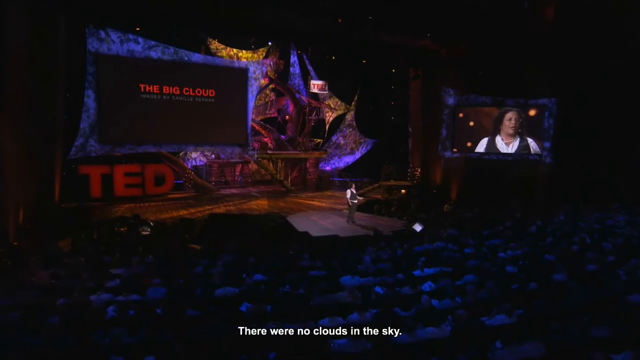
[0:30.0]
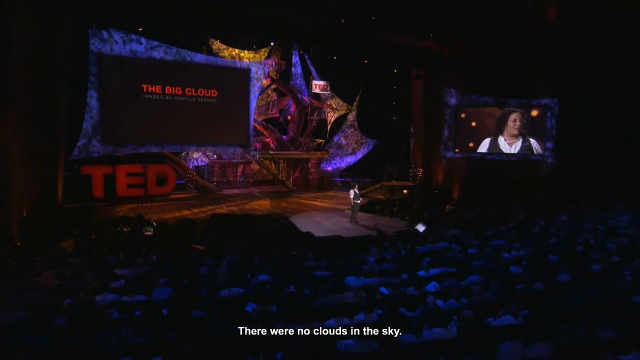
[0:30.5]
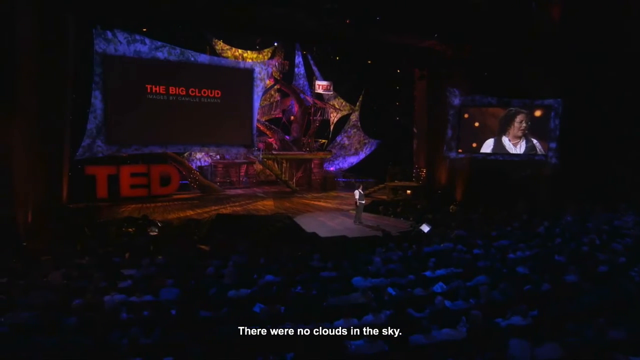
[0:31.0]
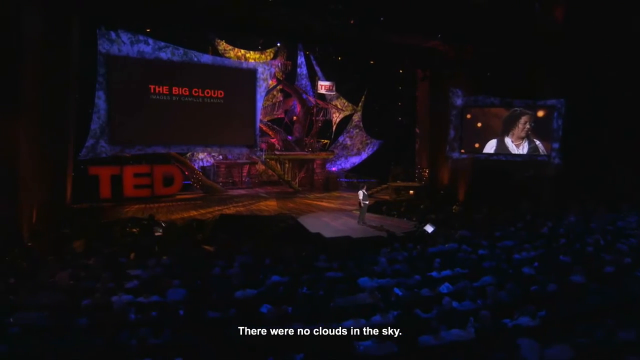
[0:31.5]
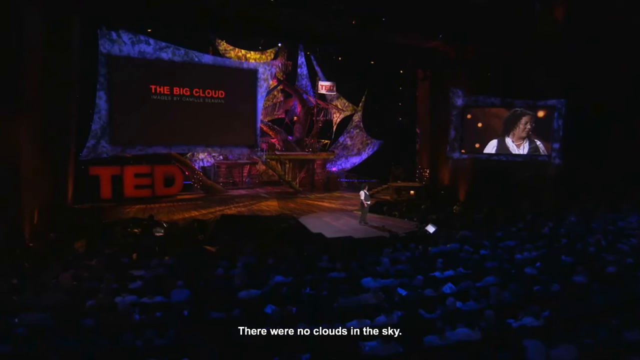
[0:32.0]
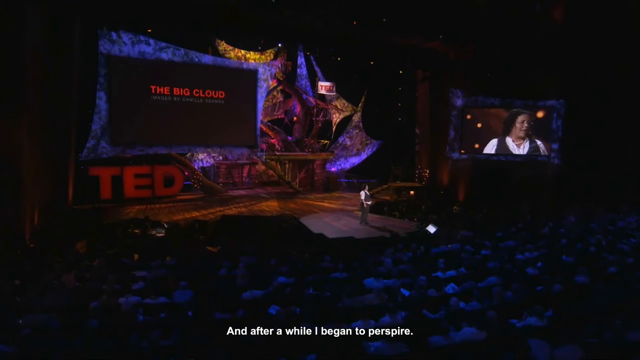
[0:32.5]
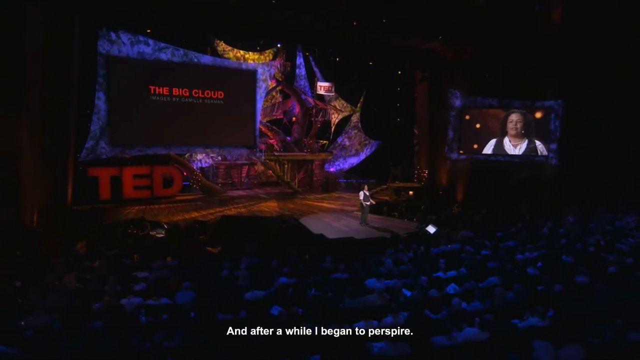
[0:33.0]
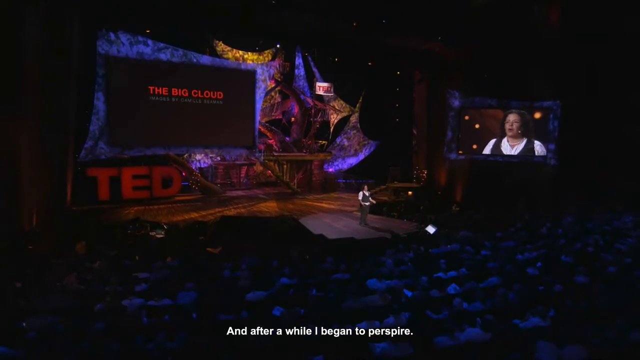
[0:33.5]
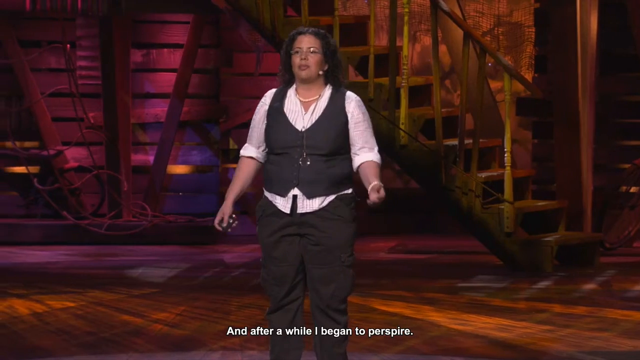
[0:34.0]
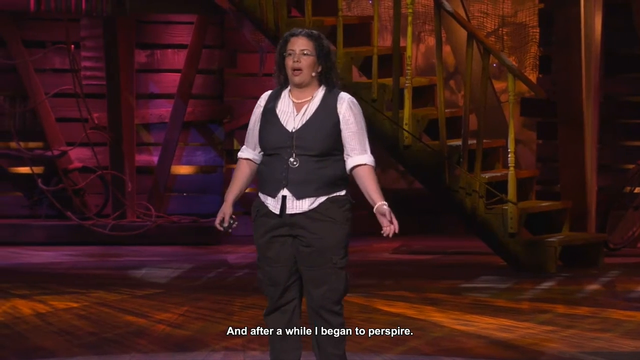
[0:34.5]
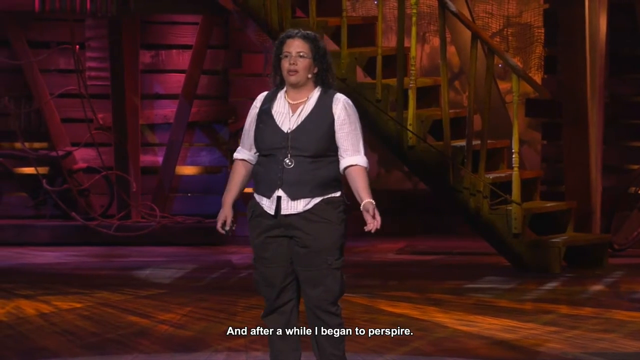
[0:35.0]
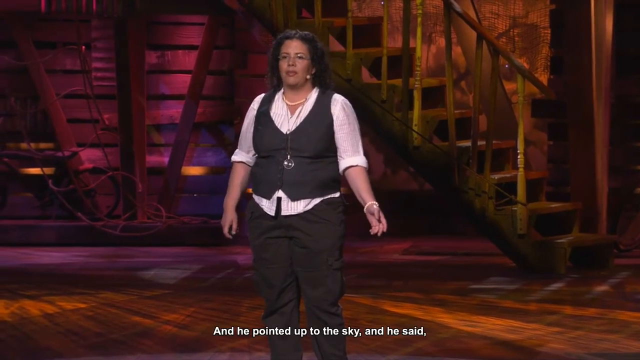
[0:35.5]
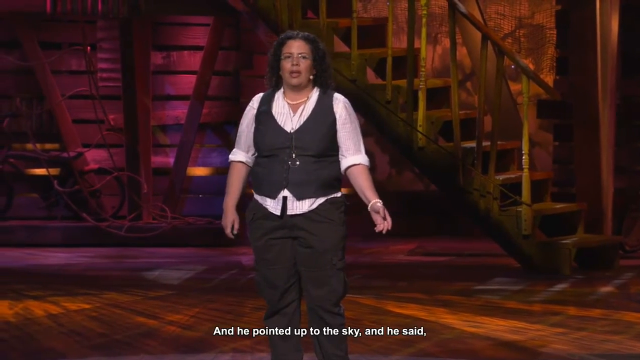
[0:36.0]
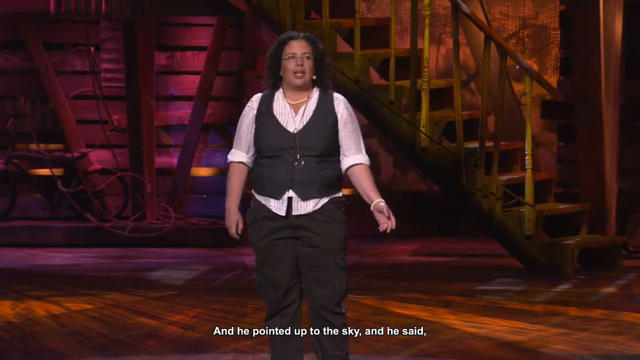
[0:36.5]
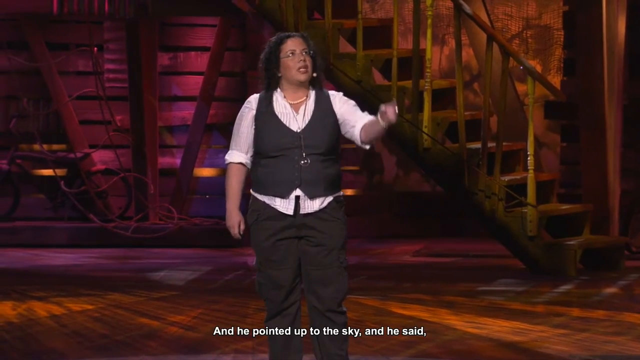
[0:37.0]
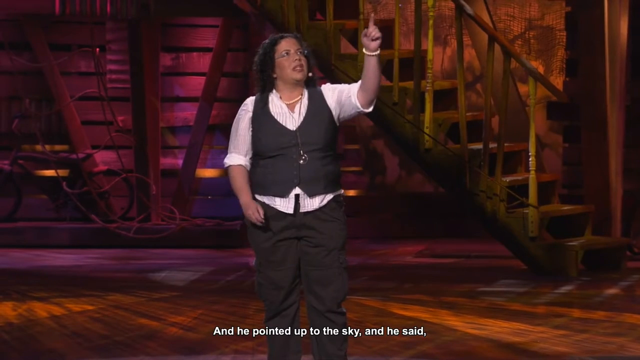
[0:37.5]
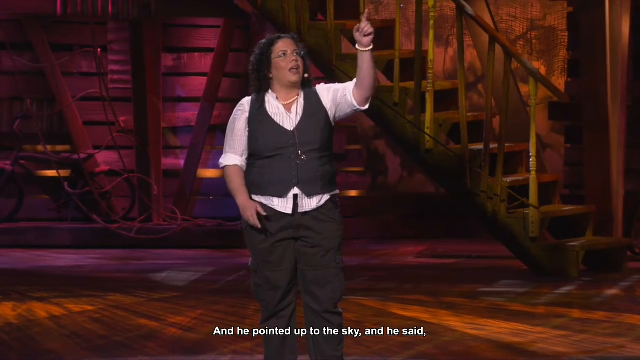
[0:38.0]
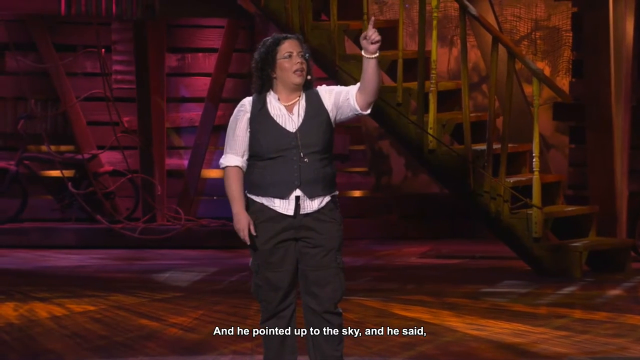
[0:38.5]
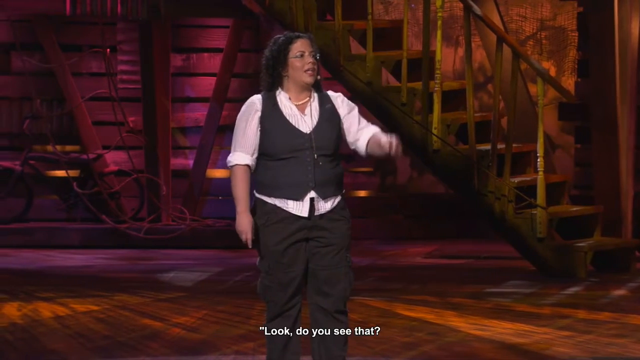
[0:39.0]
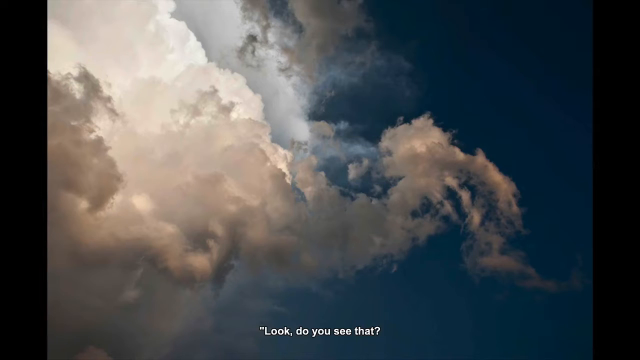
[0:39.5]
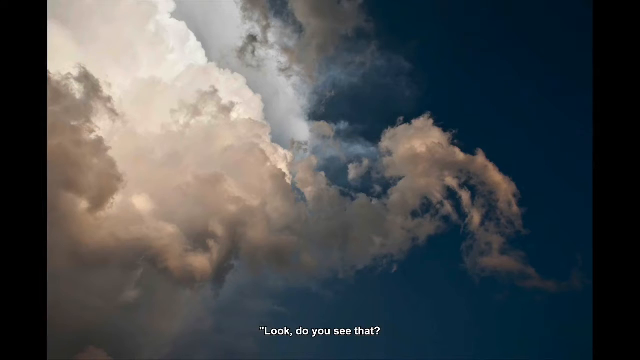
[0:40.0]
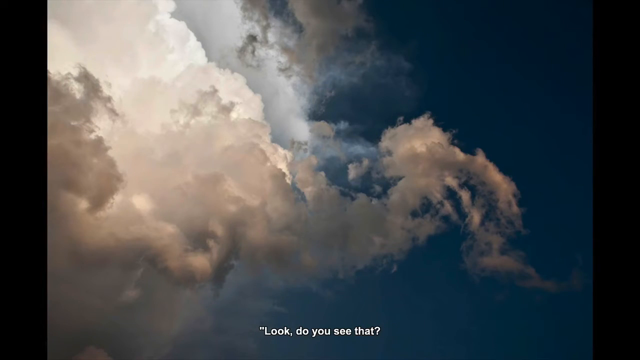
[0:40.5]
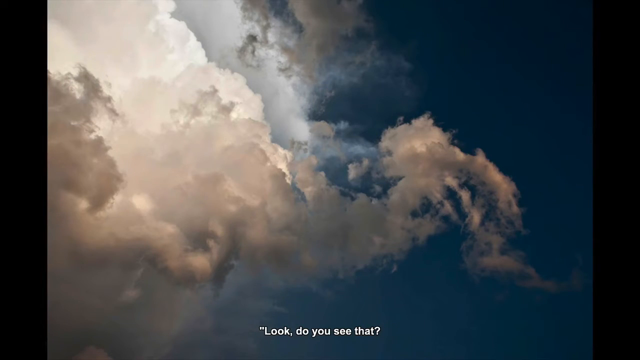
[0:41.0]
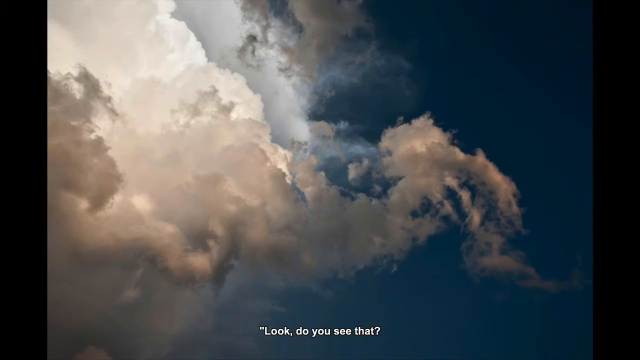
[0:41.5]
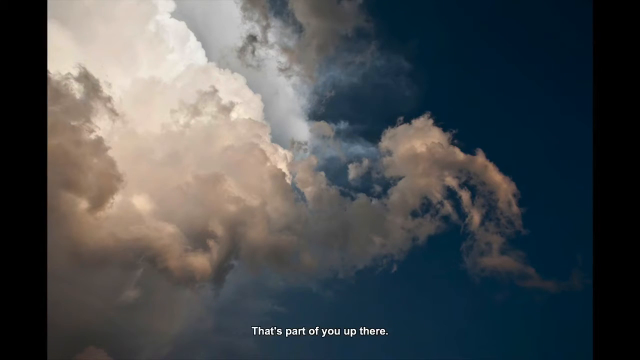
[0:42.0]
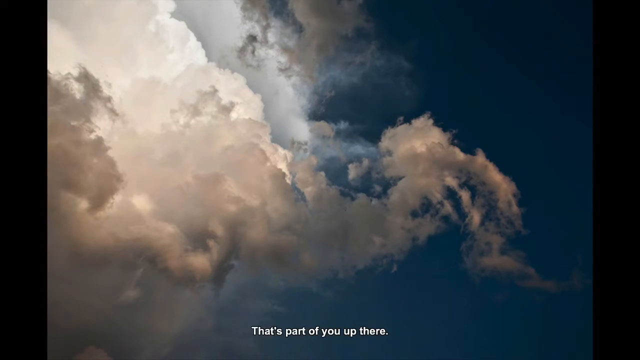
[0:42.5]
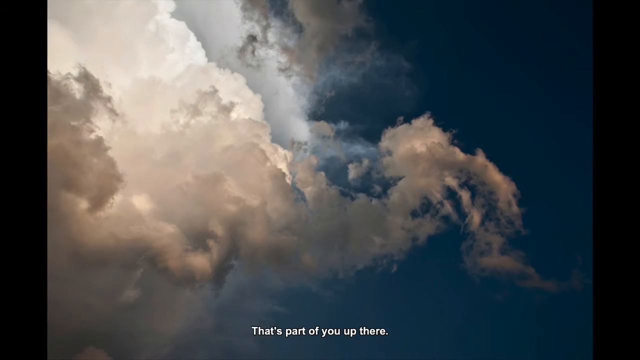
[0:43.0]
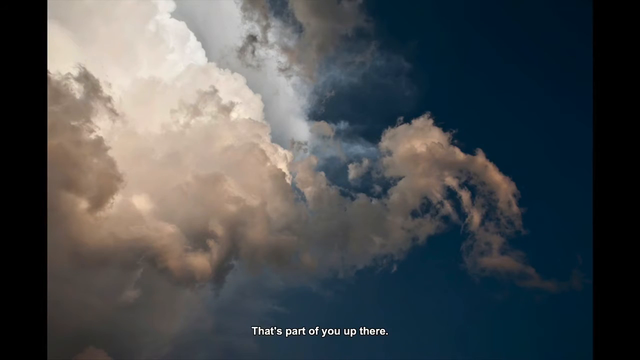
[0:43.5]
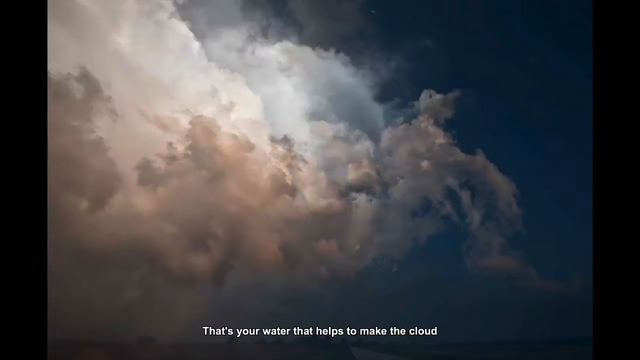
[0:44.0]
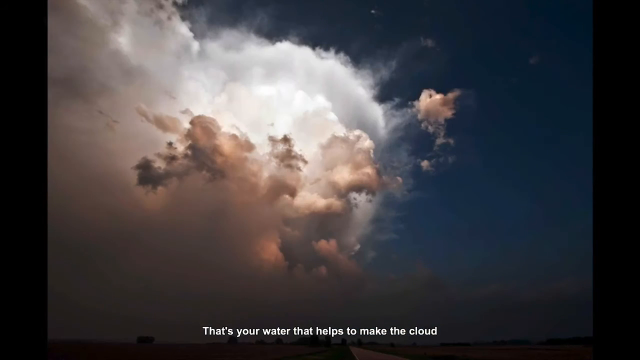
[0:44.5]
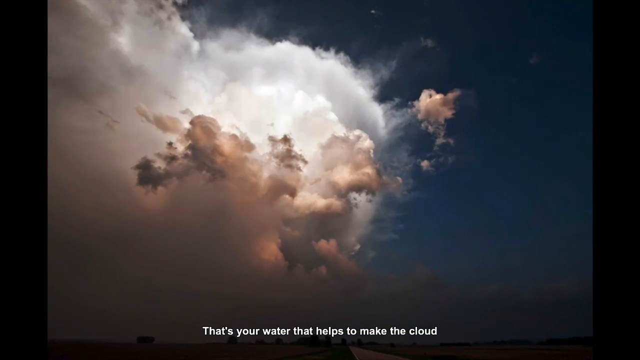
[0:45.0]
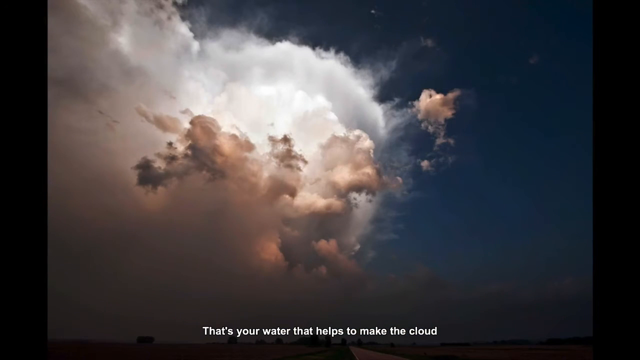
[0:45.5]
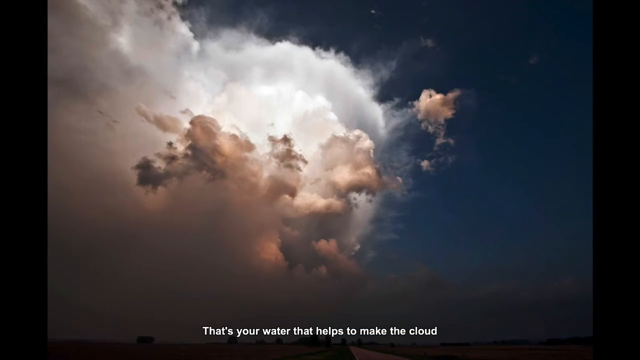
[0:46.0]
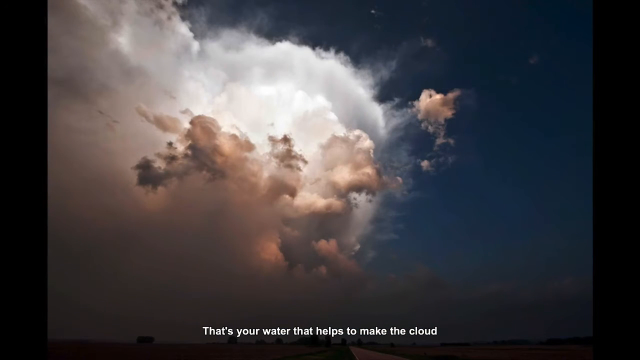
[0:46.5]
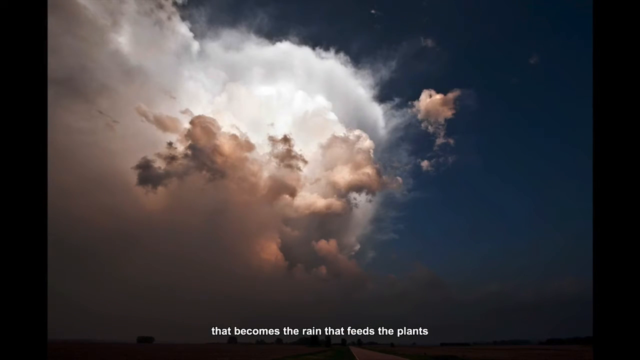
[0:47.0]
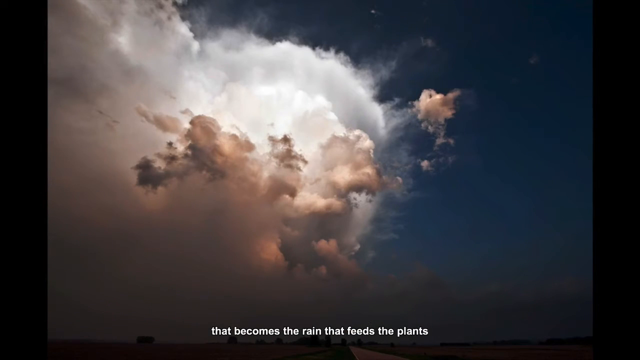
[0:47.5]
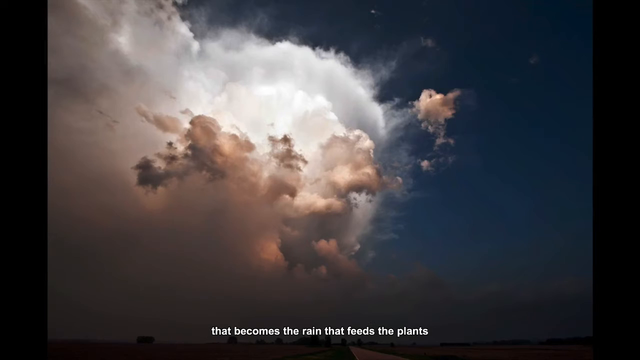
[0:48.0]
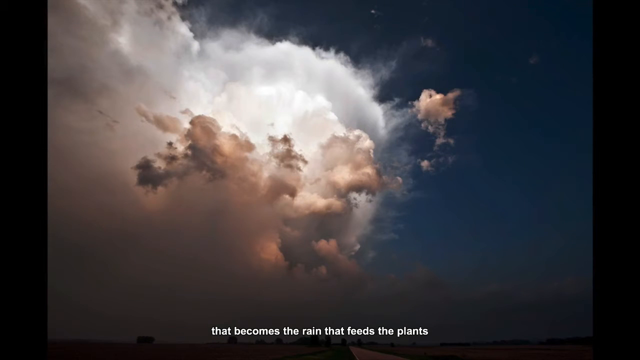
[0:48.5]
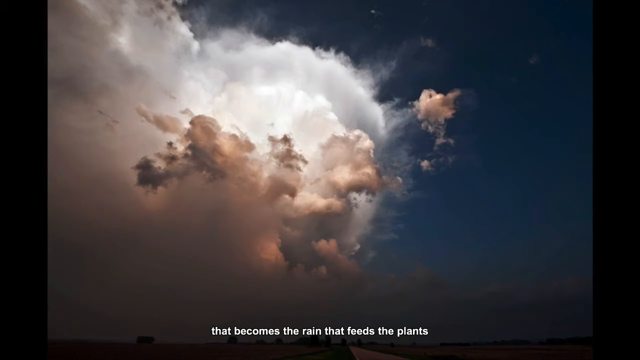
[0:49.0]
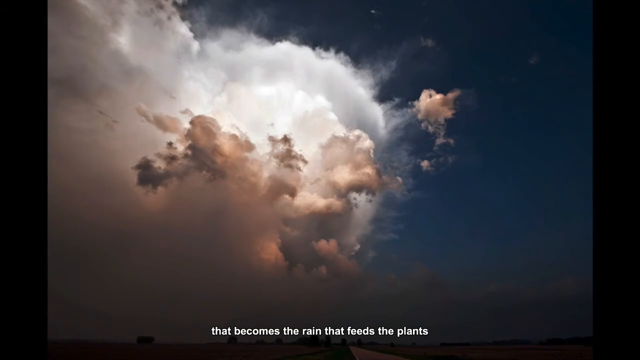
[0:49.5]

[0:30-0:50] She continues addressing the audience, looking over to her left-hand side and gesturing with her hands. In another close-up, a second necklace is visible, much longer than the first, with some sort of ornament attached at the end. She raises her left arm and points to the ceiling while looking up. On her left wrist is a beaded wristband of some sort. She keeps addressing the audience. An image of the sky and clouds appears, half bright and half dark, with subtitles reading "look do you see that?" The image changes to another sky with new clouds, again half bright and half dark, with subtitles at the bottom of the screen reading "that's your water that helps to make the cloud."